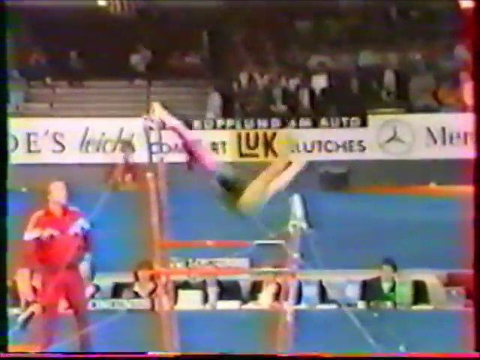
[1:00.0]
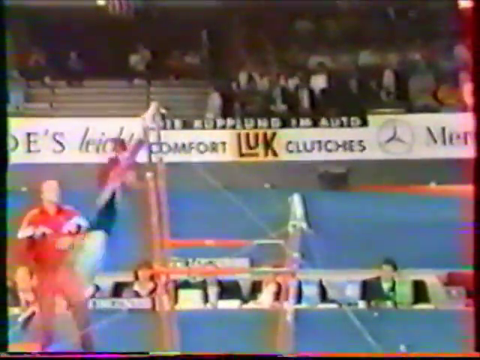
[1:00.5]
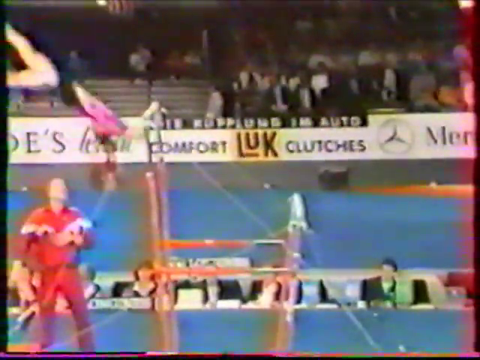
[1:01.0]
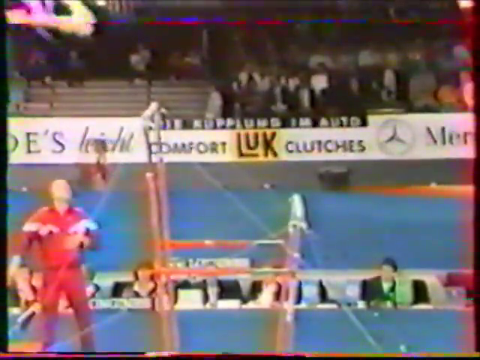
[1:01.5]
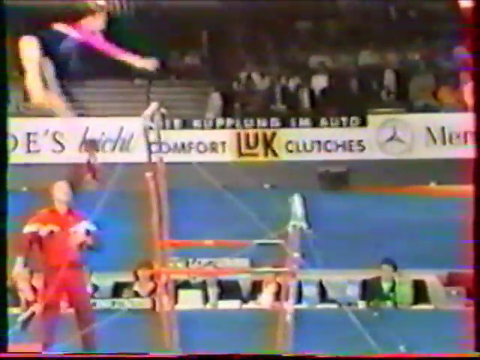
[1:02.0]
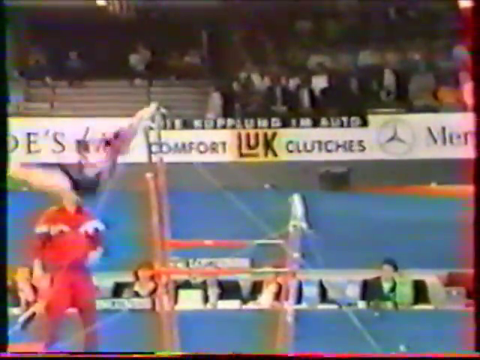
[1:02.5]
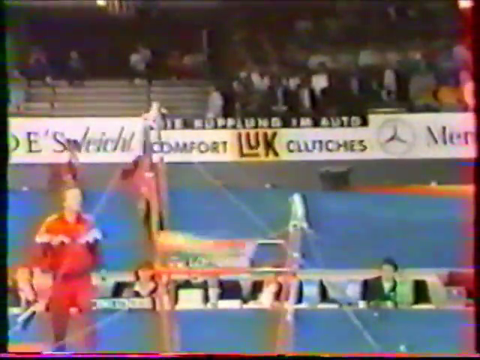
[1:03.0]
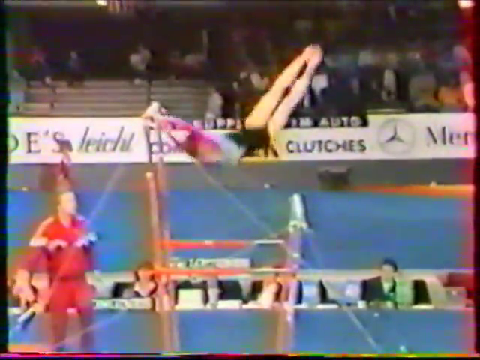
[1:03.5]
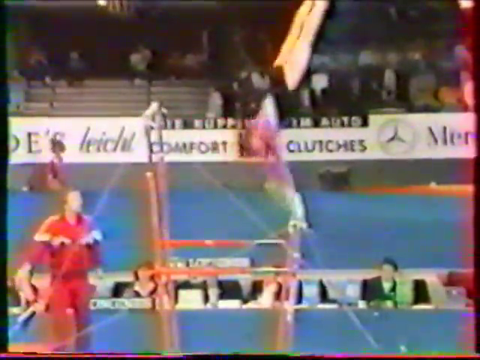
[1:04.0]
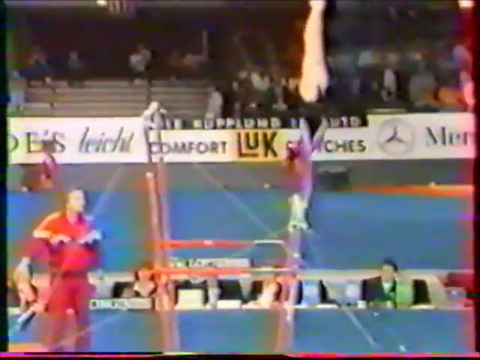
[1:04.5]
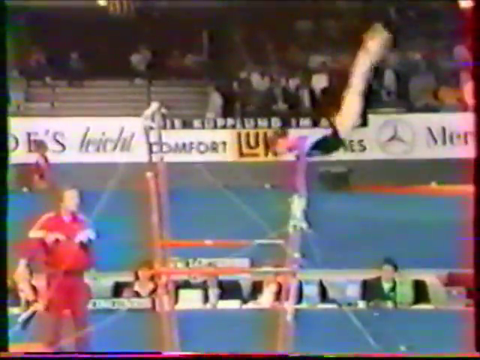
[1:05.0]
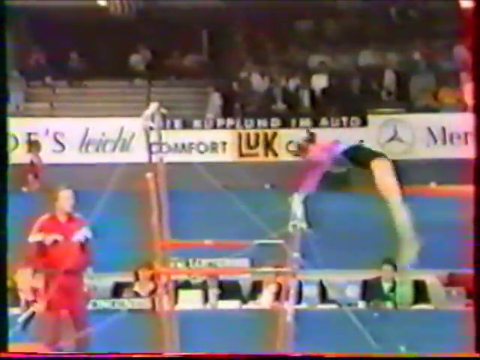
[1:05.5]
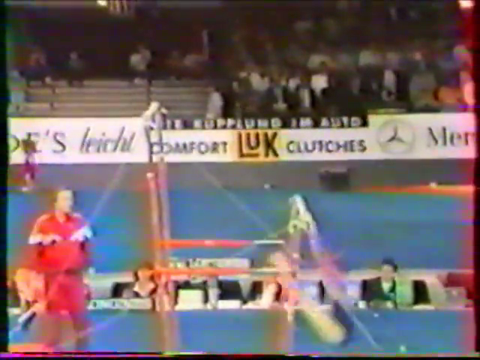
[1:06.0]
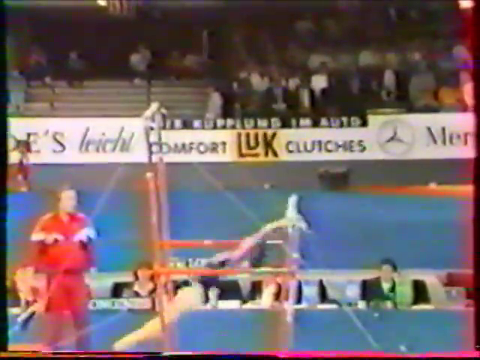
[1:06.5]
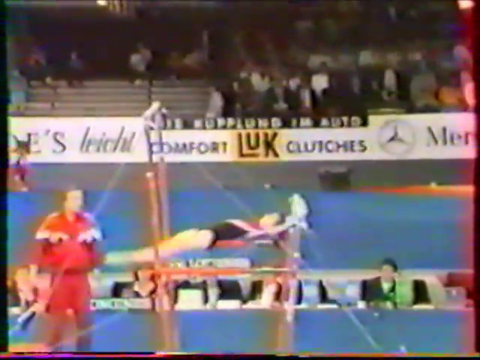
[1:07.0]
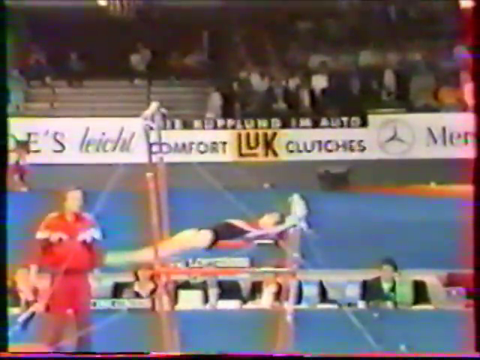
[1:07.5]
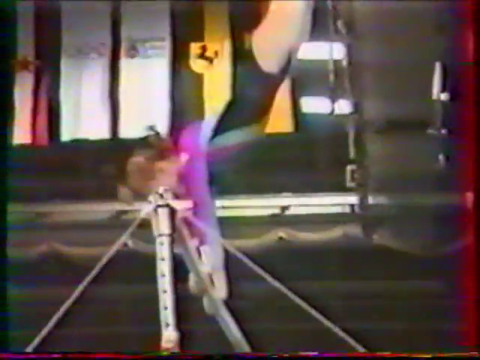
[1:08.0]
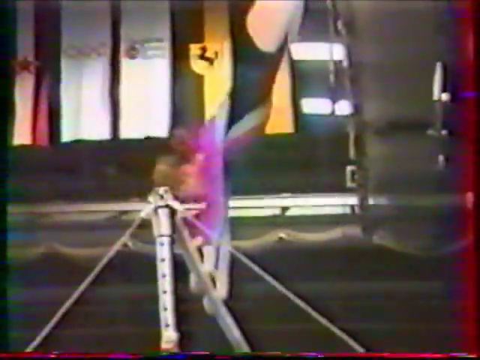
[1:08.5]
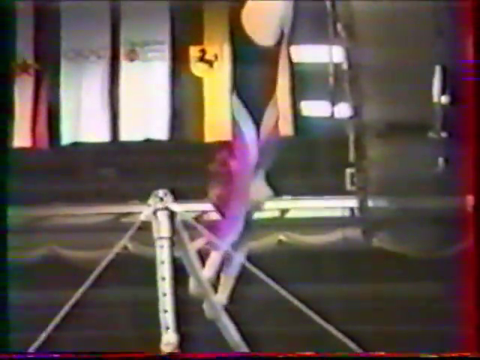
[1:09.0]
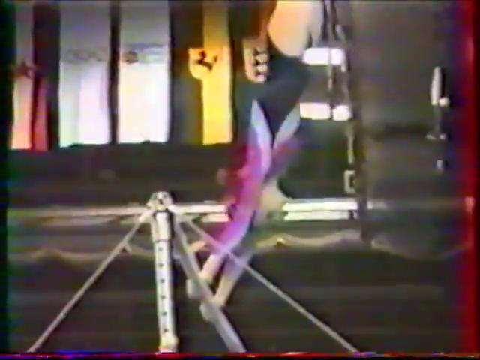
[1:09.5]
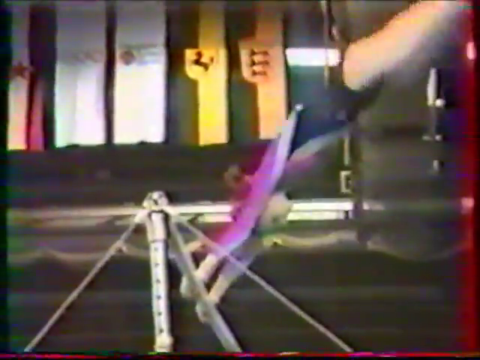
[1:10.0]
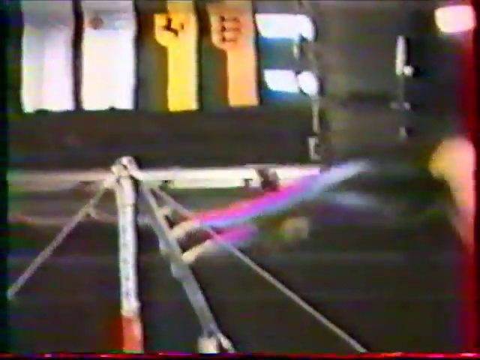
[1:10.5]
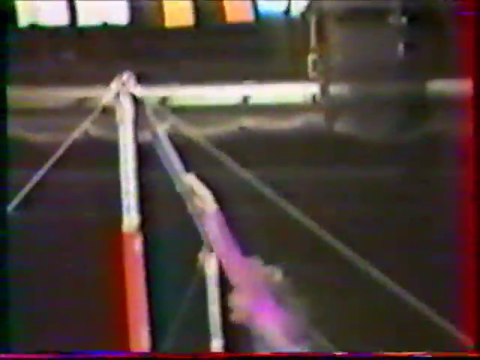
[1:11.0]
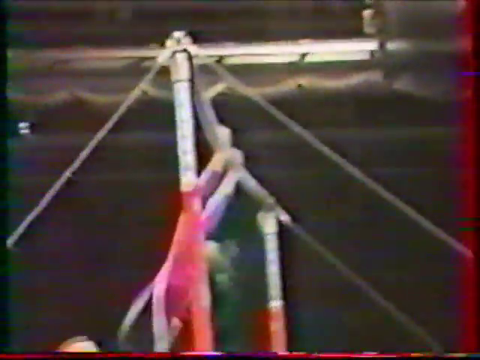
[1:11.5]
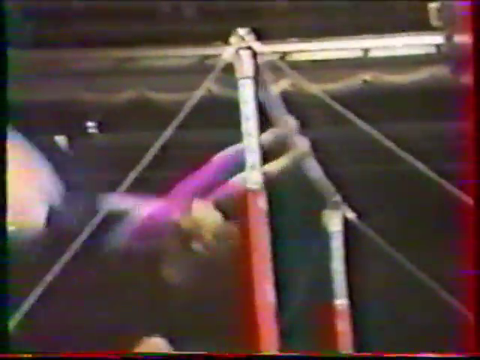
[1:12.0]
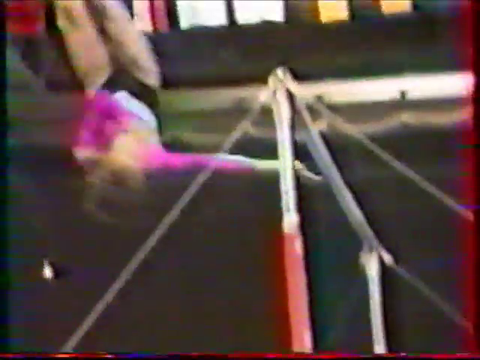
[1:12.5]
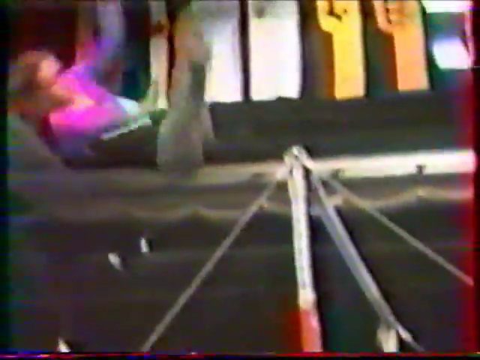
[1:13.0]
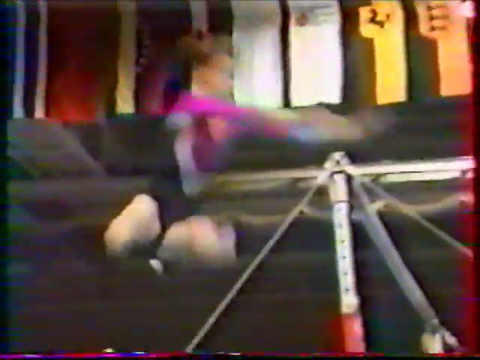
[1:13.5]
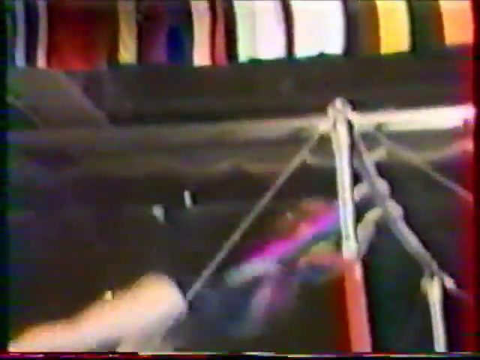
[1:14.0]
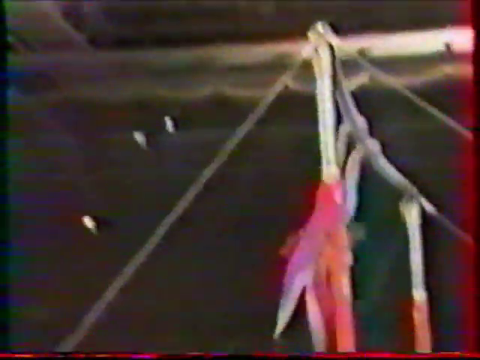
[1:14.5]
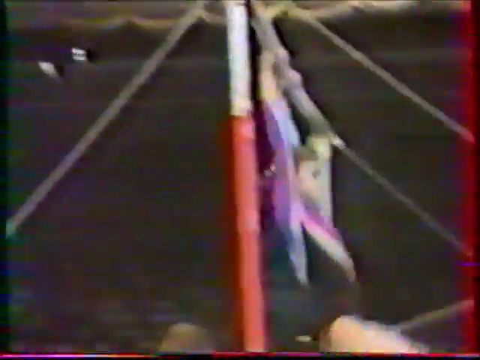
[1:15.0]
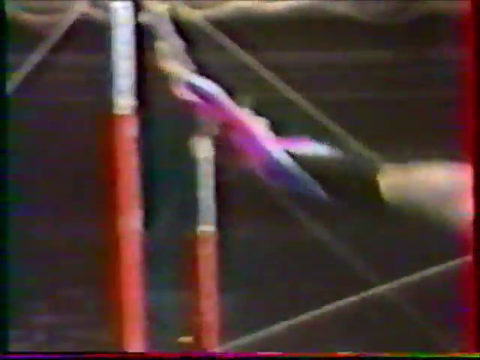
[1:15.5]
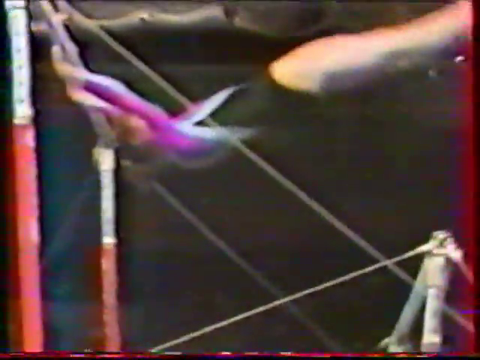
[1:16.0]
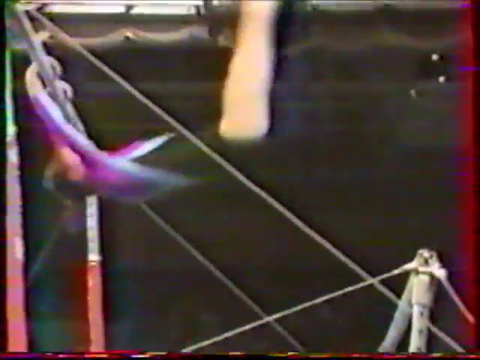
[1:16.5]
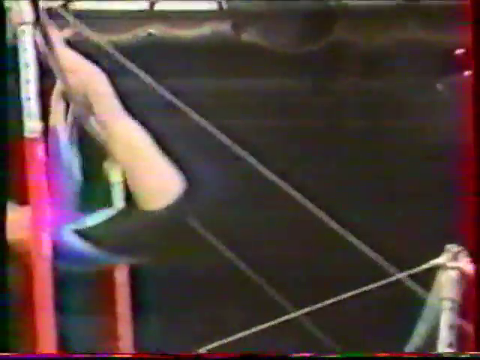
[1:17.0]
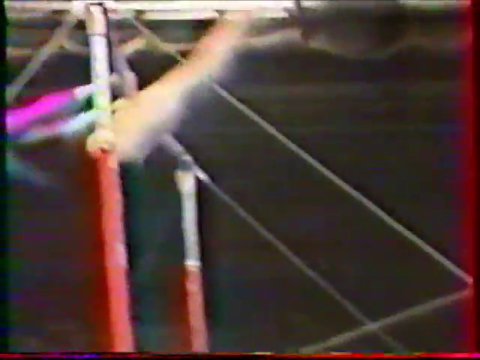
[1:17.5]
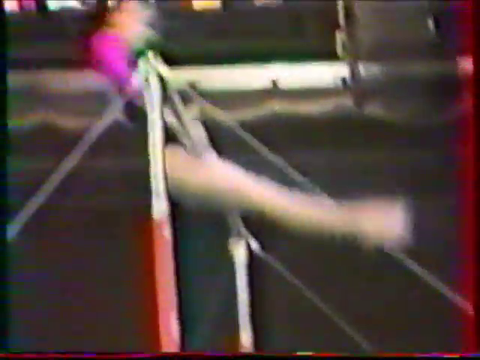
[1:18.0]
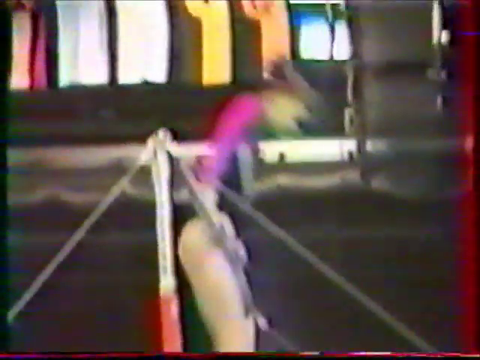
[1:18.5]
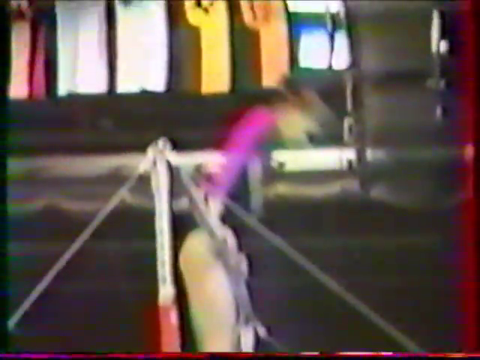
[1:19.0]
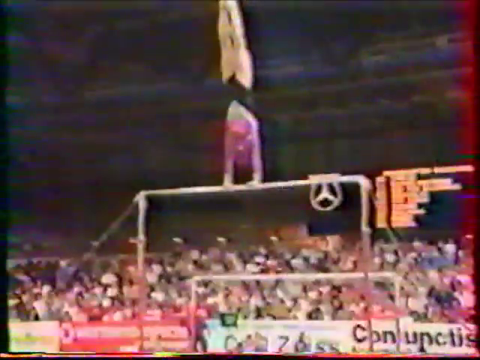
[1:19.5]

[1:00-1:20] What is apparently a highlights replay of the performance is shown. In the background, from just over halfway up the frame, is a white advertising border with "Comfort LUK clutches" in the center, followed by the three-pronged Mercedes logo in a circle and the letters "MER", which run to the edge of the screen. Crowds fill the right of that upper area, and on the left there are steps between sections of the crowd. In the lower half, a man in a red tracksuit stands quite close to the bars, watching. The gymnast is seen side-on as highlights of her routine play, including the turn in the air with her legs spread wide while her arms reach forward to grab the bar with both hands; she then moves to a more horizontal position before moving back and bringing her upper body up over the bar.